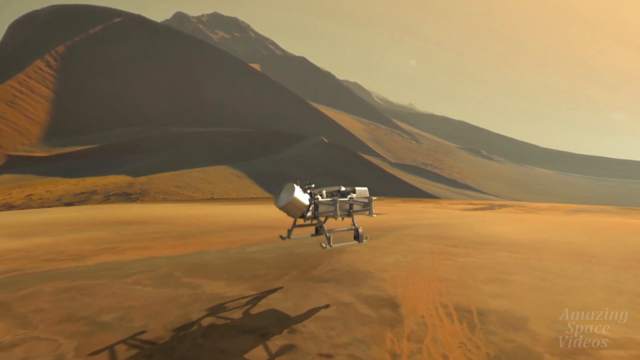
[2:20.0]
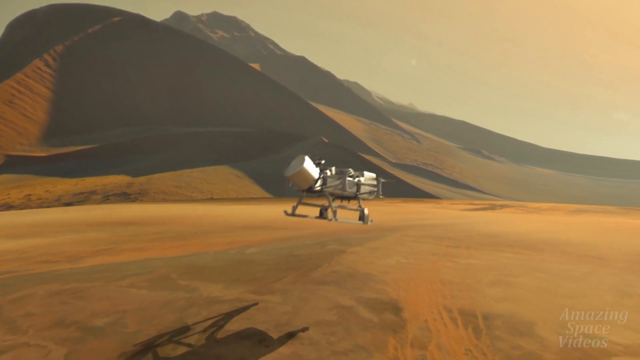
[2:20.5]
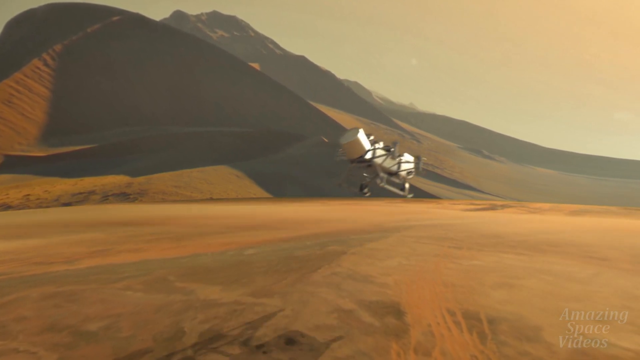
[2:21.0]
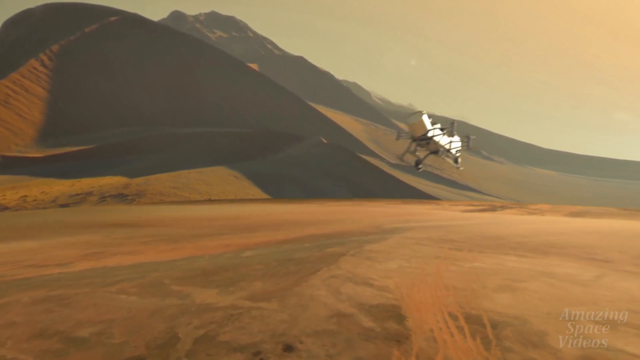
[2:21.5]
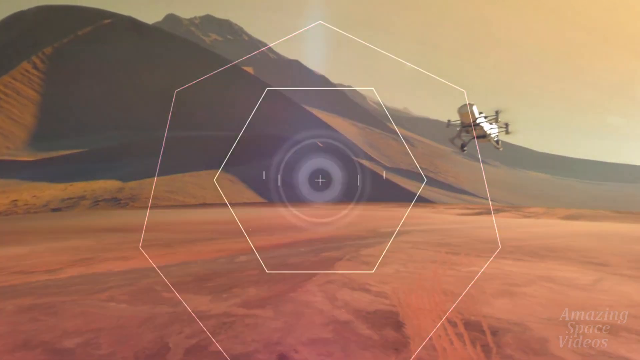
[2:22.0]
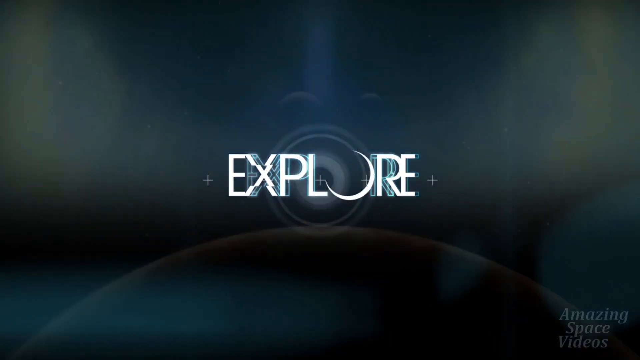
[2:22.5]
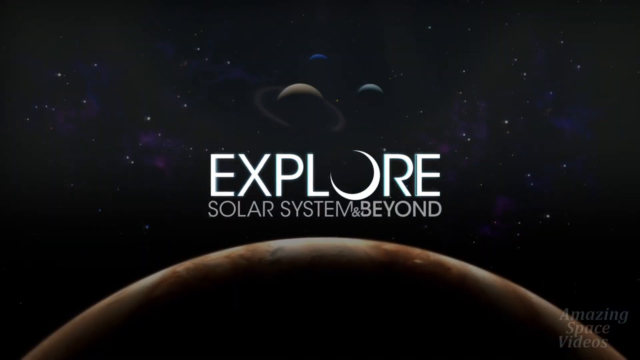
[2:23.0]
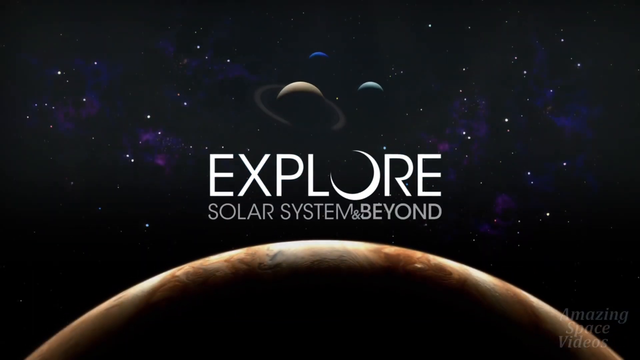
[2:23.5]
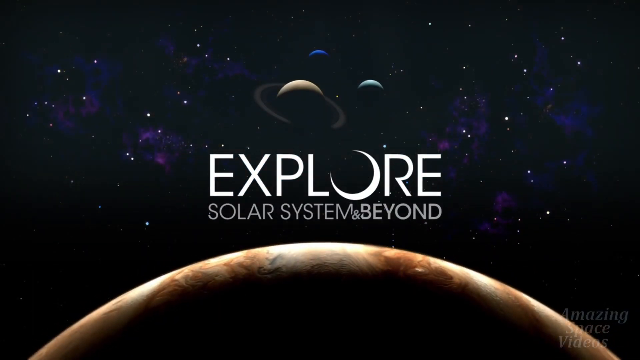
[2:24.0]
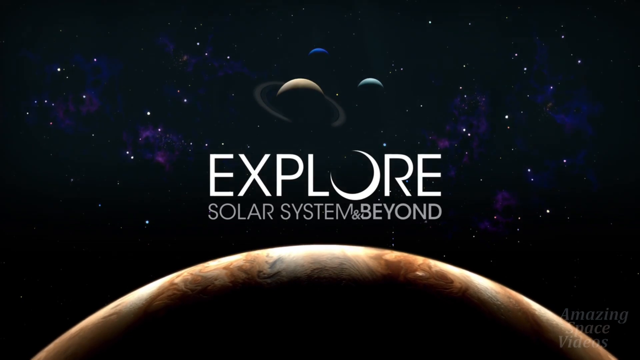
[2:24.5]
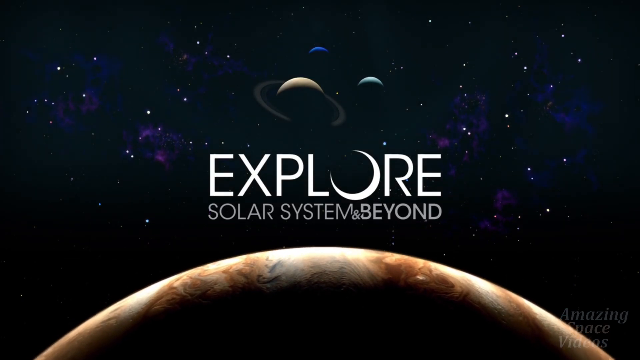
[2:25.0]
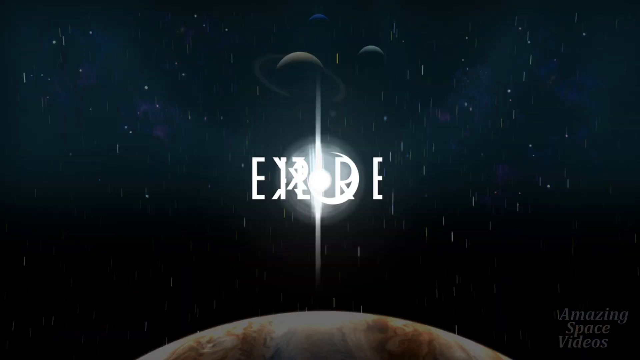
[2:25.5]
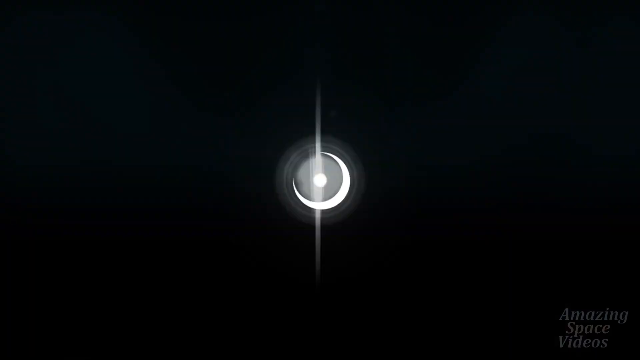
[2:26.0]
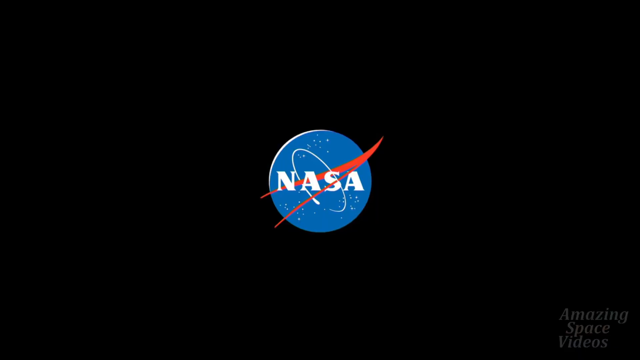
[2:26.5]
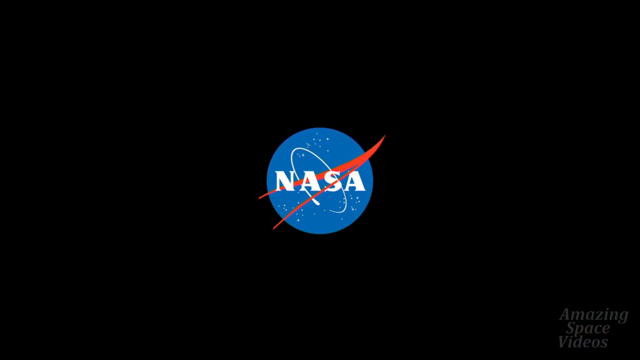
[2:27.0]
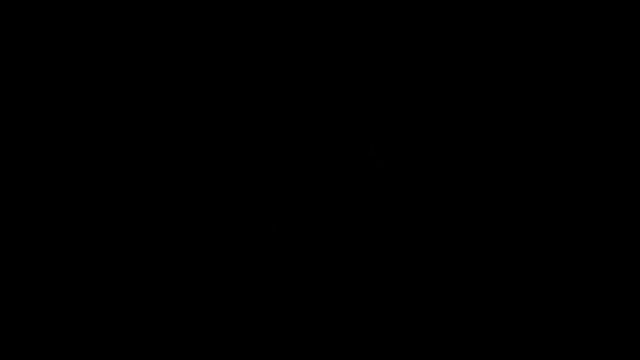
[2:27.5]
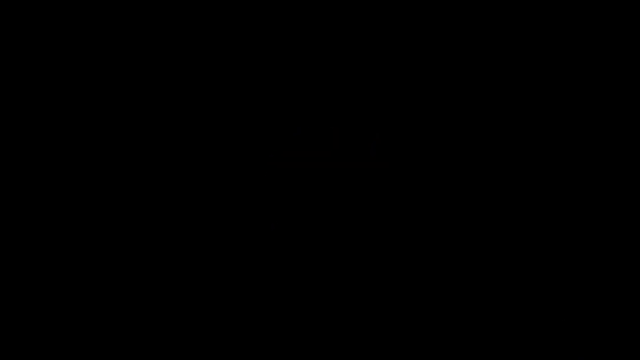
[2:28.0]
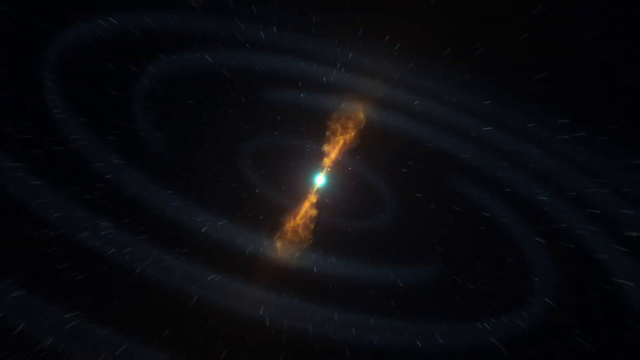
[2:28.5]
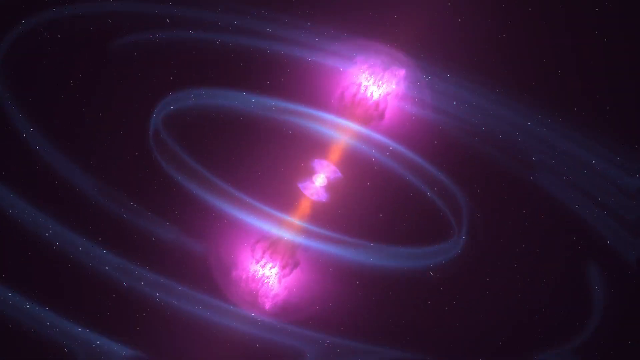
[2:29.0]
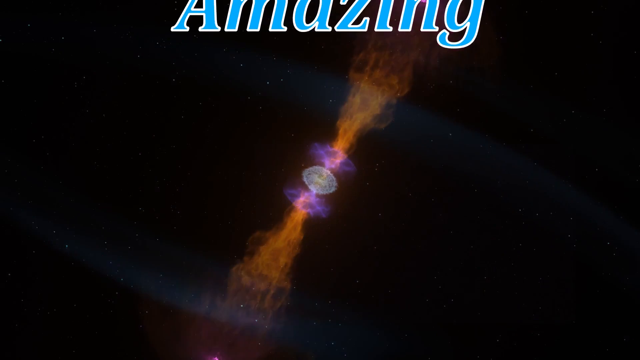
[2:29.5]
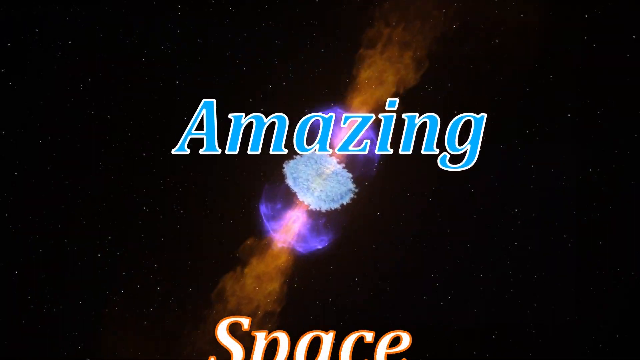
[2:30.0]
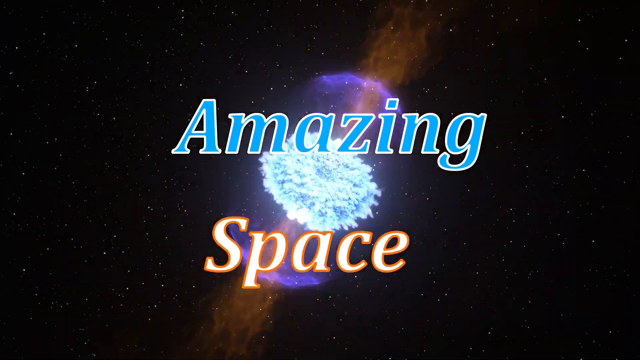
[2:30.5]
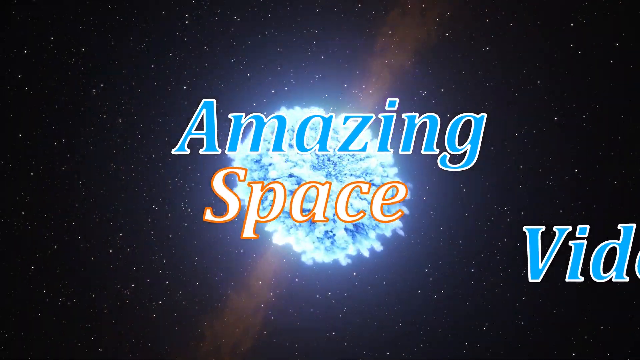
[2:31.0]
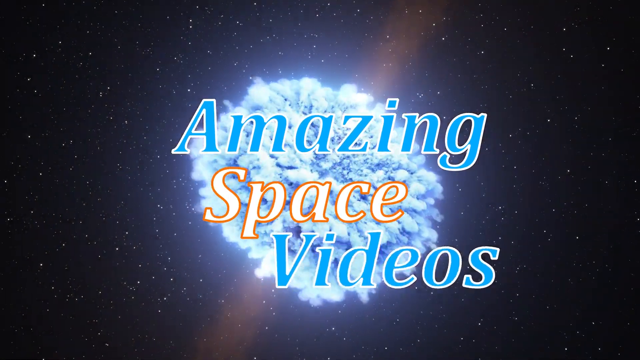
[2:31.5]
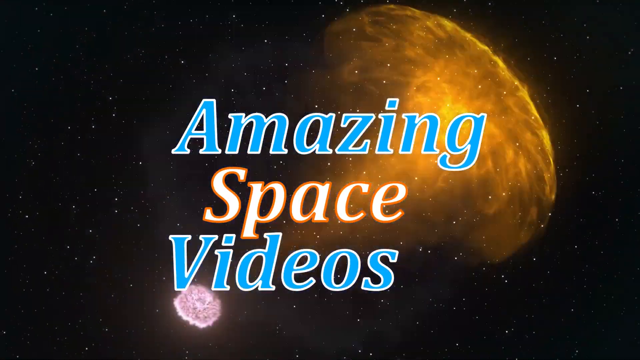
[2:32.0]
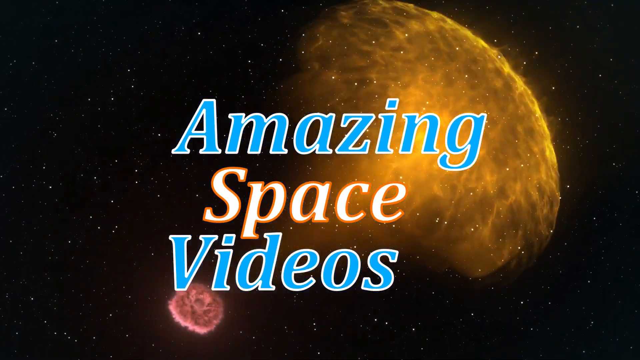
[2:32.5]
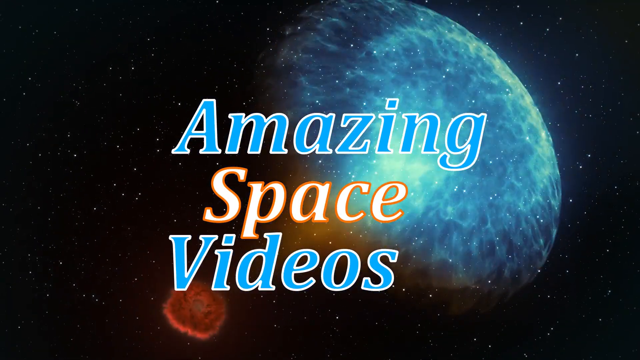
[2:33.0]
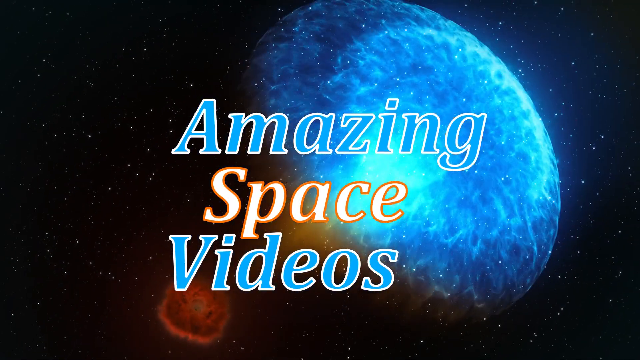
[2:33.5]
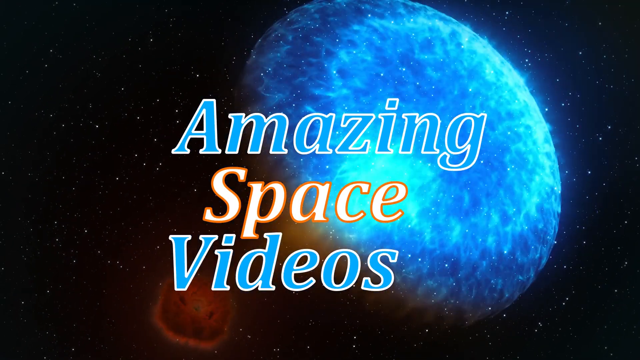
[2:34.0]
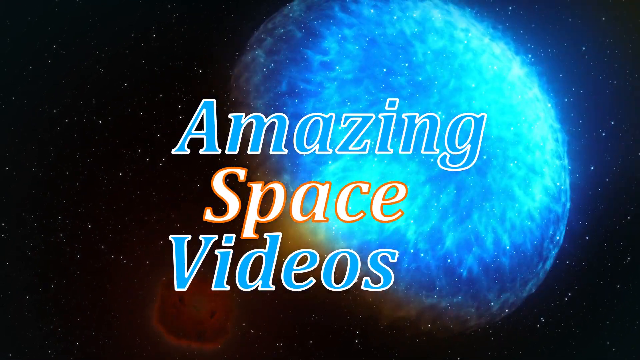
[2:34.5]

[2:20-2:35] A 3D rendering shows some kind of drone with four propellers, two on each side, resting on two railings, one on each side. It spins its propellers and eventually takes off from a flat, brown, sandy surface with mountains in the distance. It flies with its nose tilted downward and rear tilted upward, heading toward the right of the screen. The screen then flashes to an end card depicting a 3D rendering of the solar system with the planets aligned, showing Jupiter, Saturn, and two other planets in the distance, one white and one blue. The background is a black and purple starry sky with various white dots representing distant stars or planets. White text at the very top reads "Explore Solar System and Beyond". The text quickly zooms in on itself and is replaced by the NASA logo on a black background.